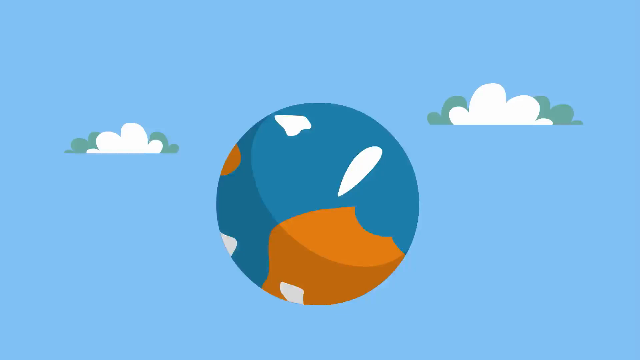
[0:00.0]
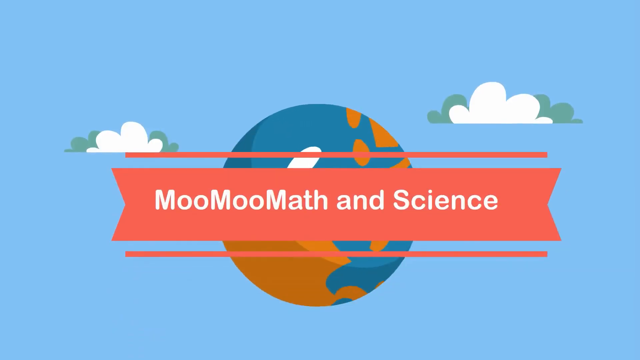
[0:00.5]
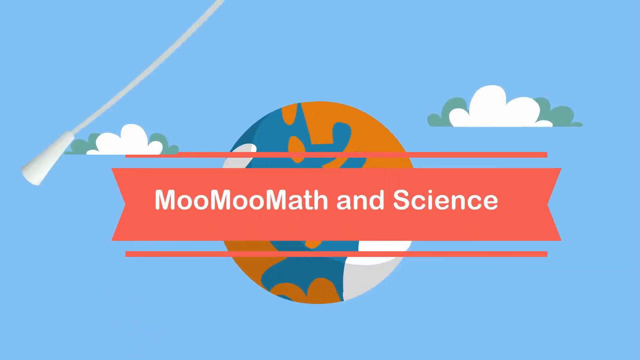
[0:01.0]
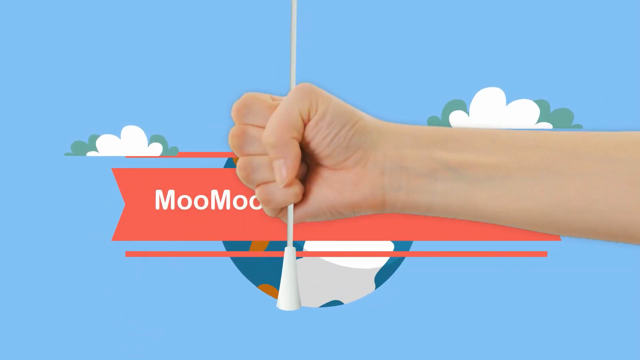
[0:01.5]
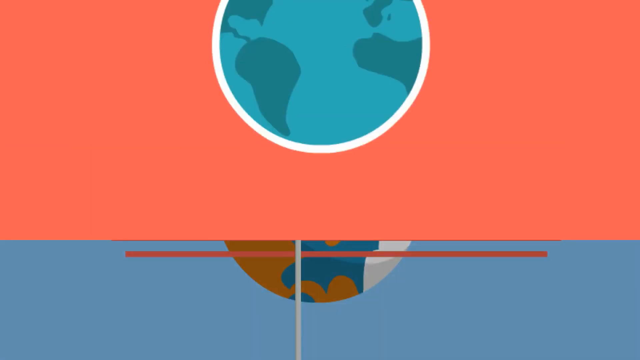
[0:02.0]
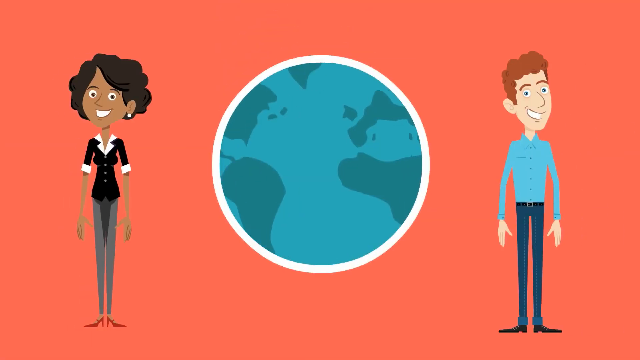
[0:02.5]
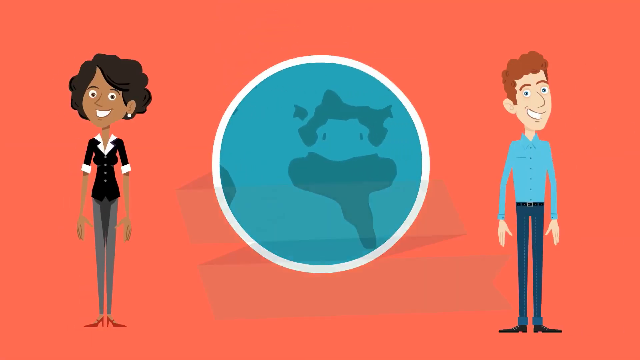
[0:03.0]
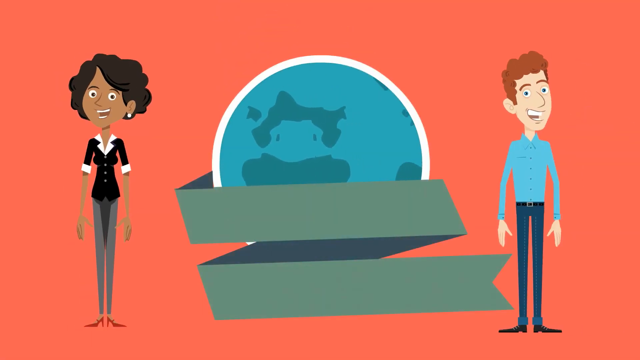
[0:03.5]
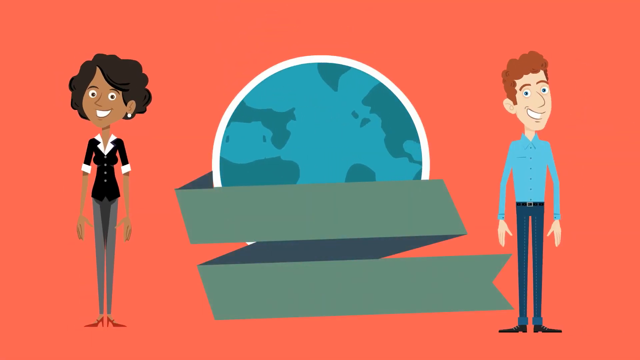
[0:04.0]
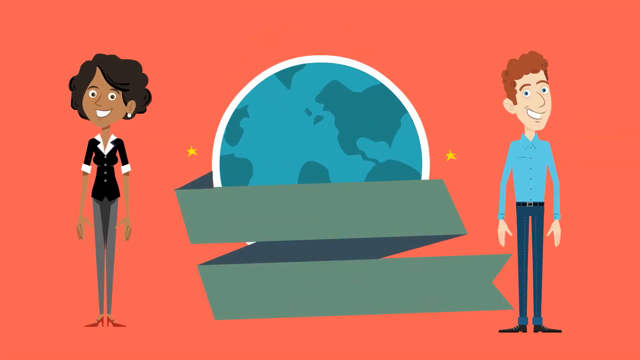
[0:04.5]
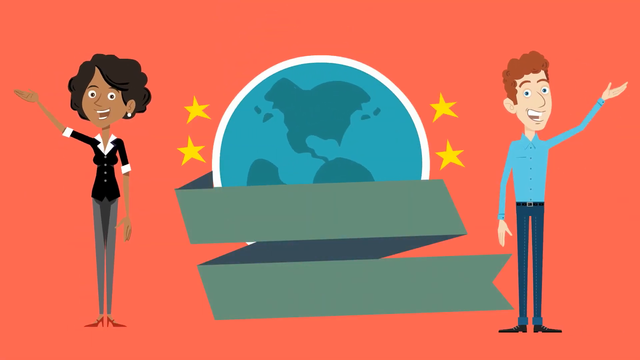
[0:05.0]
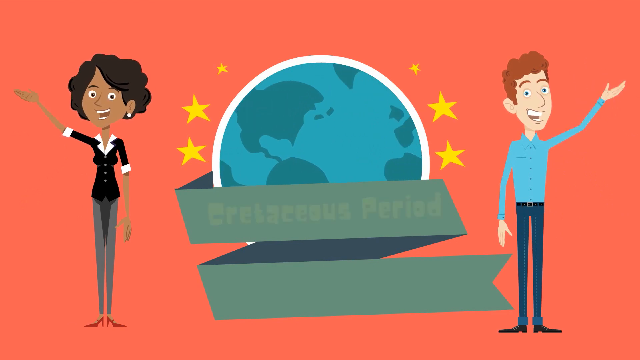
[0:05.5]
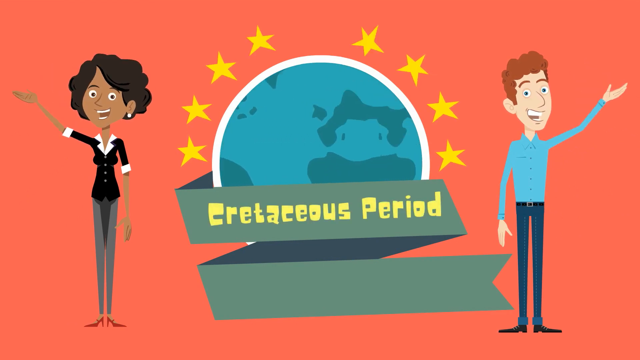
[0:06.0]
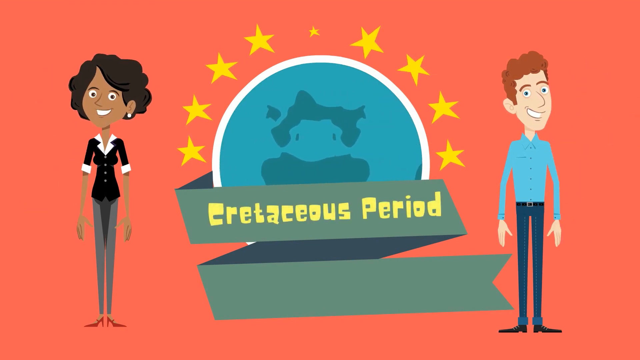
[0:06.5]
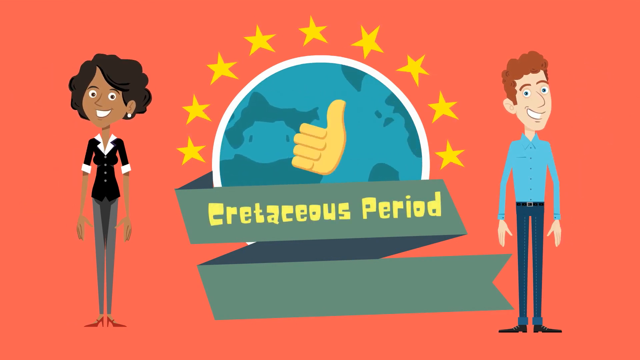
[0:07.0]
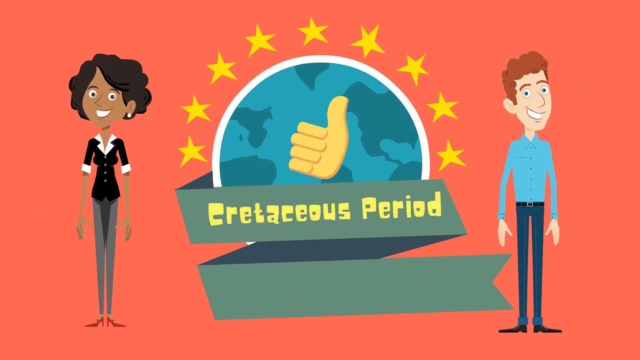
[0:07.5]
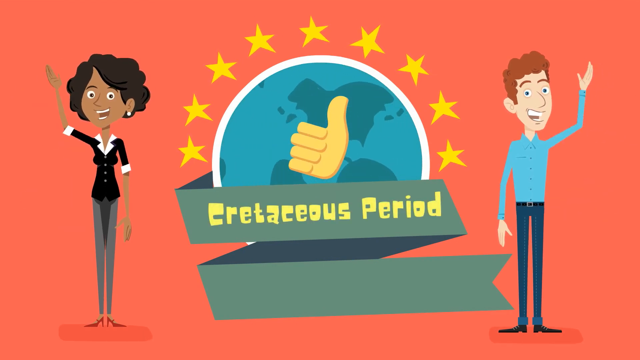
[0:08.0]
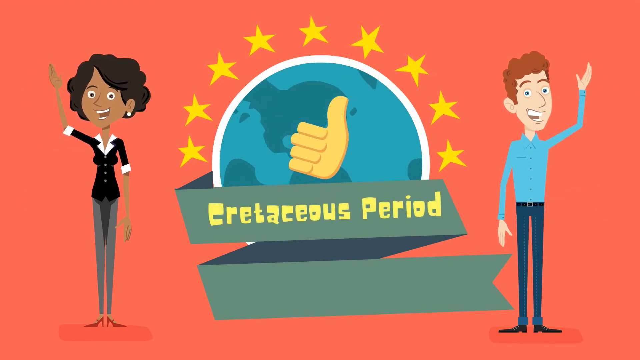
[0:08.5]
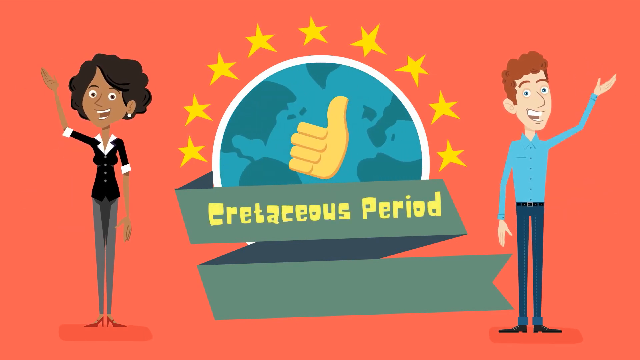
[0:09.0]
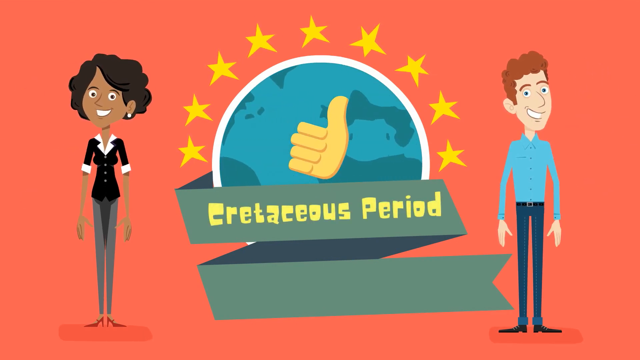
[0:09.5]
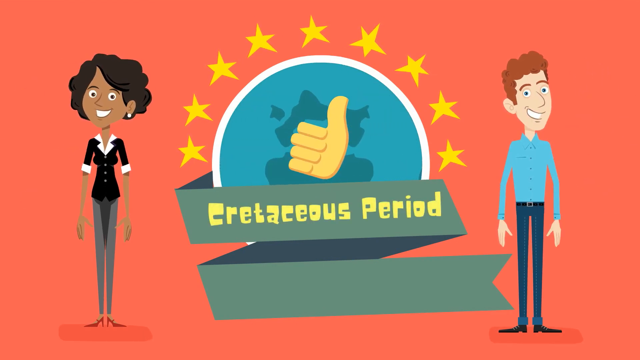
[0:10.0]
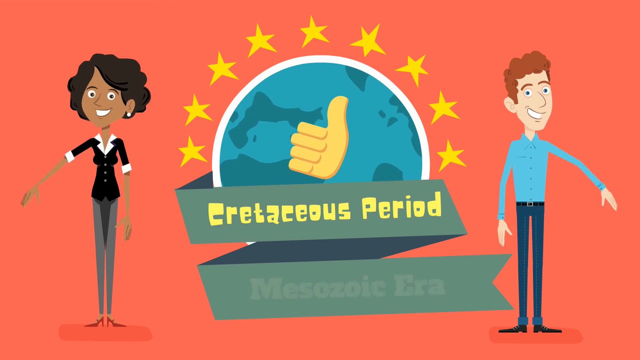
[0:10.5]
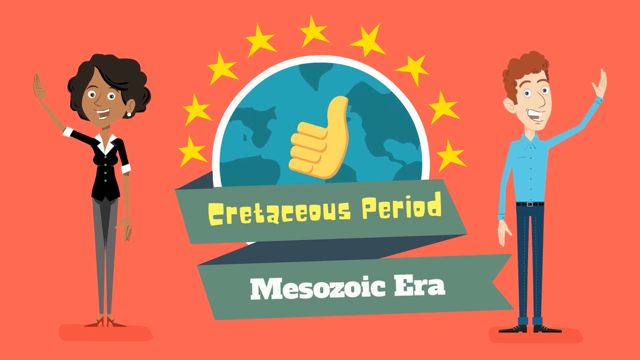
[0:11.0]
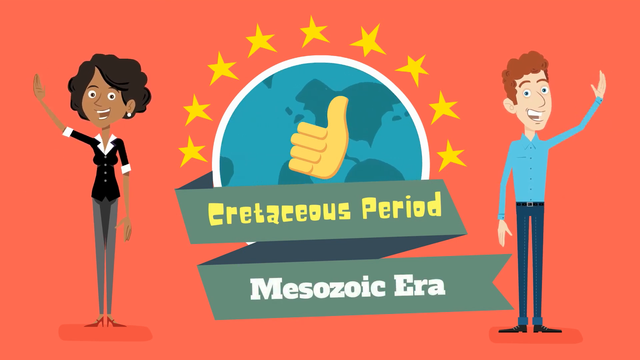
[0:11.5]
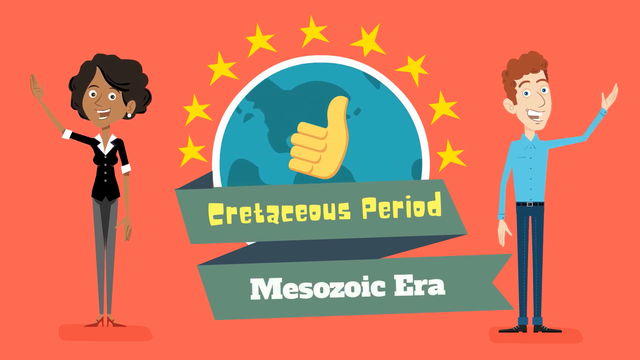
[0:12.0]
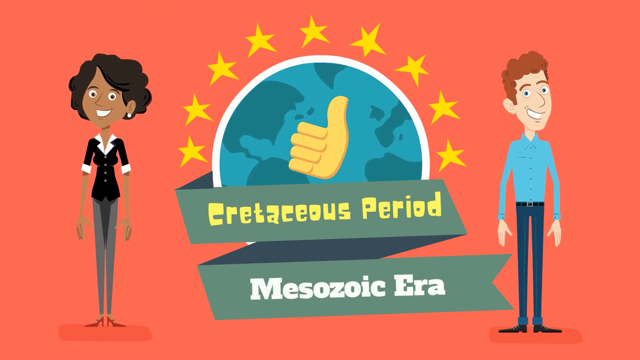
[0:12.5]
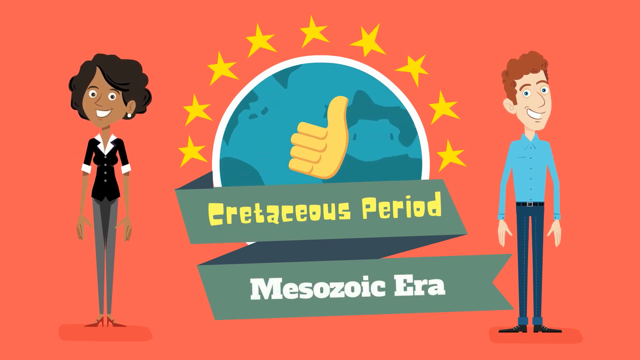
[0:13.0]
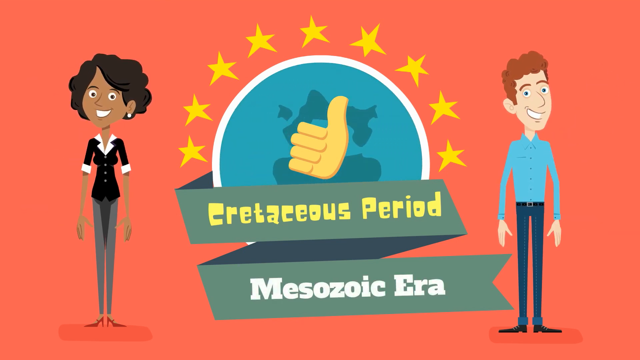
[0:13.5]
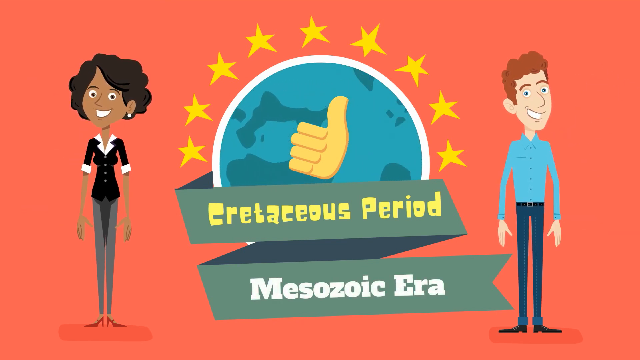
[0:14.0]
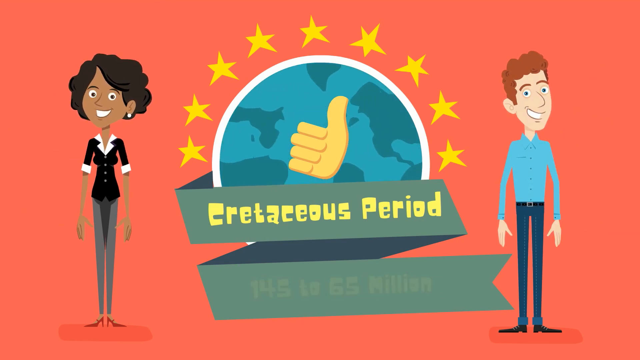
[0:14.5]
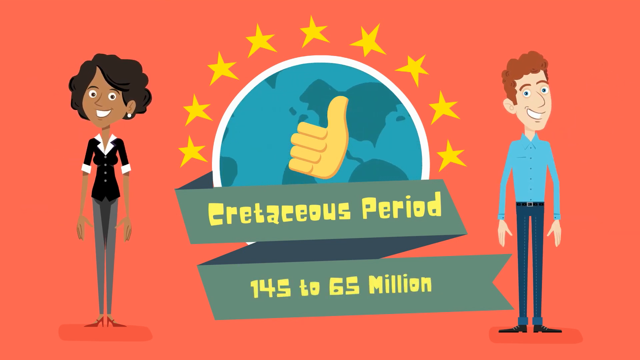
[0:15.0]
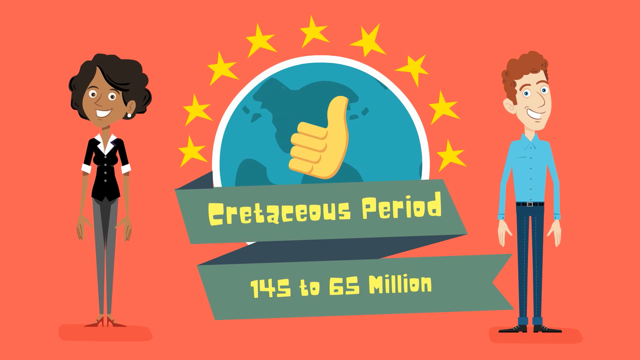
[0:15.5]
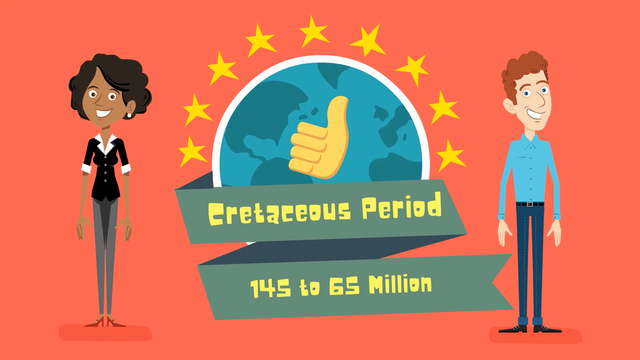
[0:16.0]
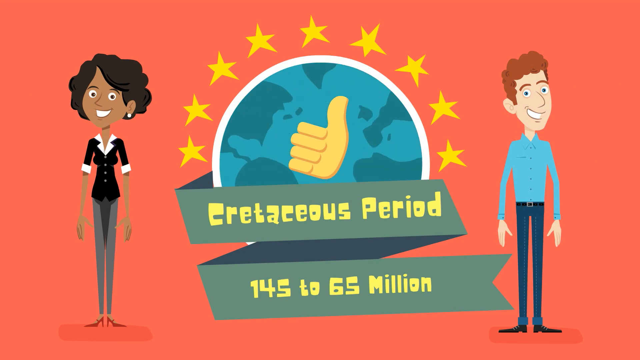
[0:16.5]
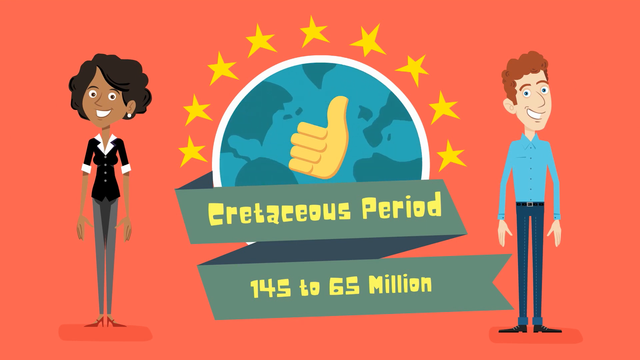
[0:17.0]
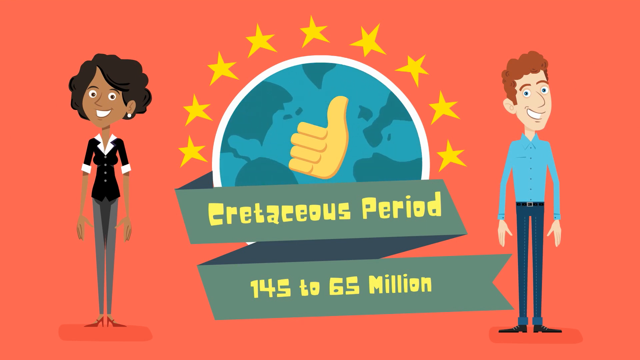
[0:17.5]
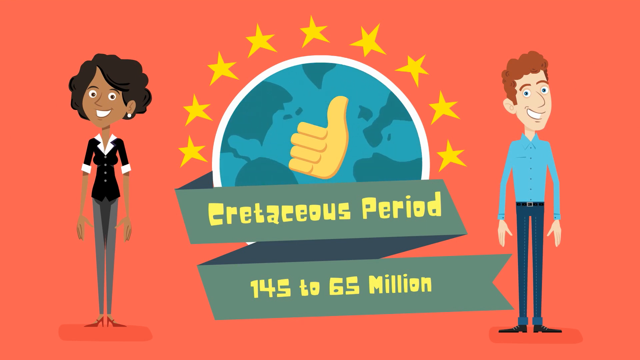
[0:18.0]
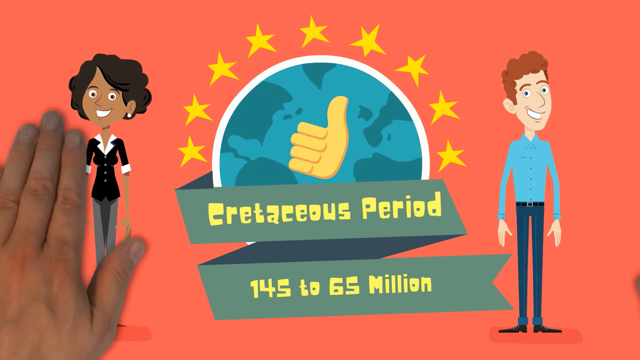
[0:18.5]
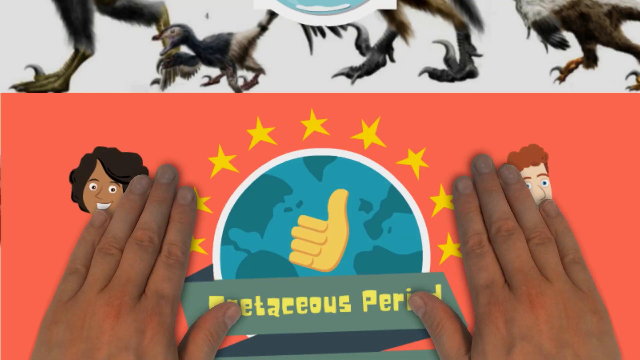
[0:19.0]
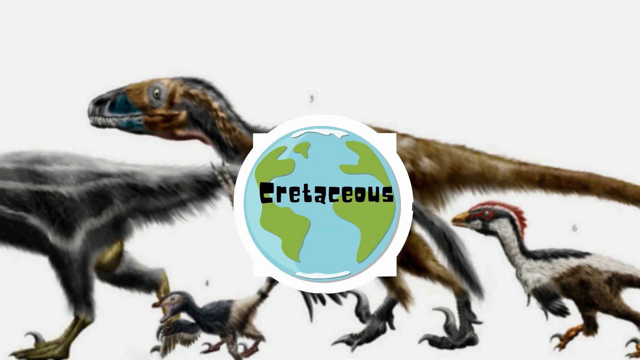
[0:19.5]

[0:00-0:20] A planet of some kind orbits, and the text "Moon, math and science" appears in white letters over a red banner. Suddenly a hand appears and pulls out a string, which changes the image to a red background with a spinning planet and two people right beside it. A string is attached to the planet, and nine stars are over it. A banner reads "Cretaceous period" with "Mesozoic era" beneath it, and the people on each side of the planet cheer, seemingly happy. The screen shows that the Cretaceous period happened 145 to 65 million years ago. Then a couple of hands pull out the image, changing the screen to something new.